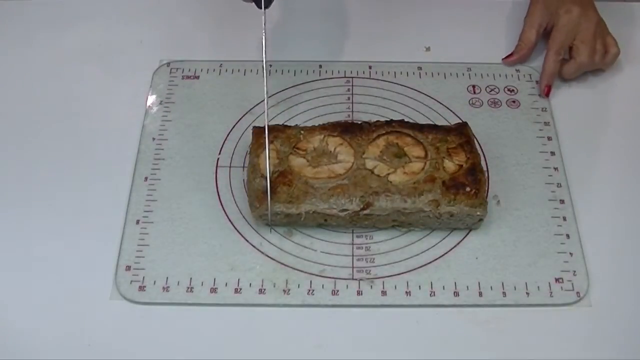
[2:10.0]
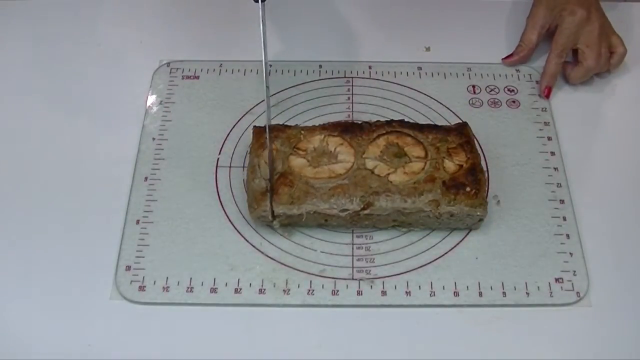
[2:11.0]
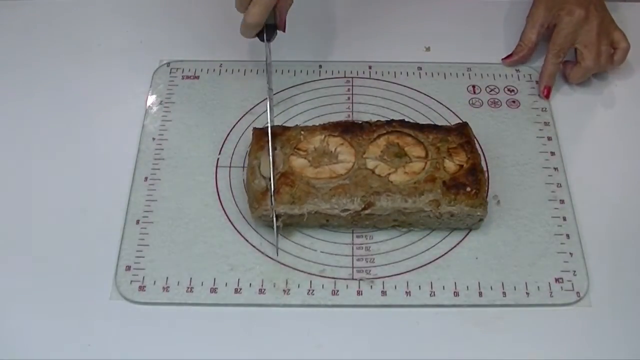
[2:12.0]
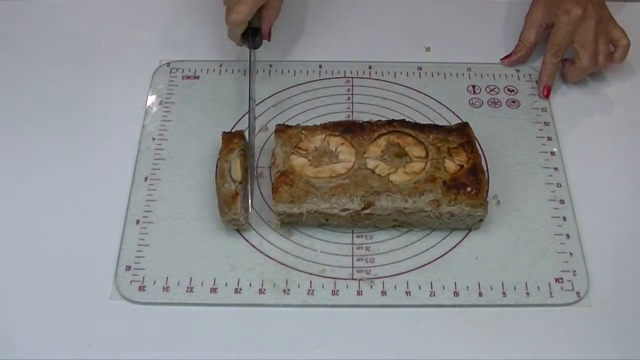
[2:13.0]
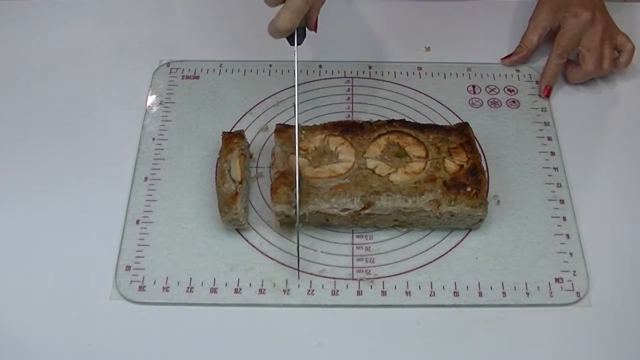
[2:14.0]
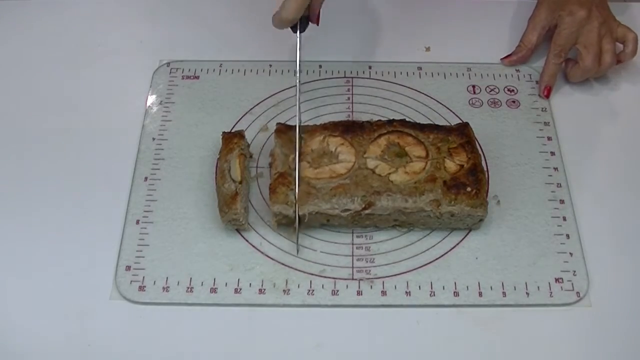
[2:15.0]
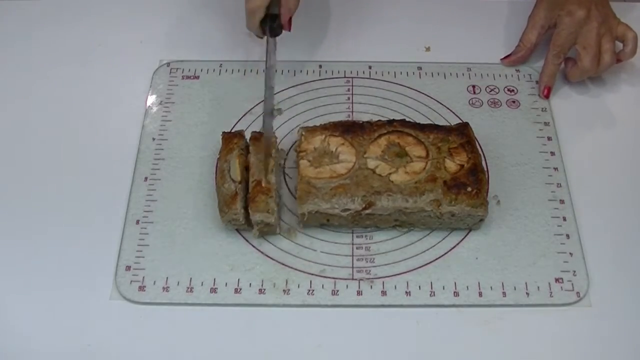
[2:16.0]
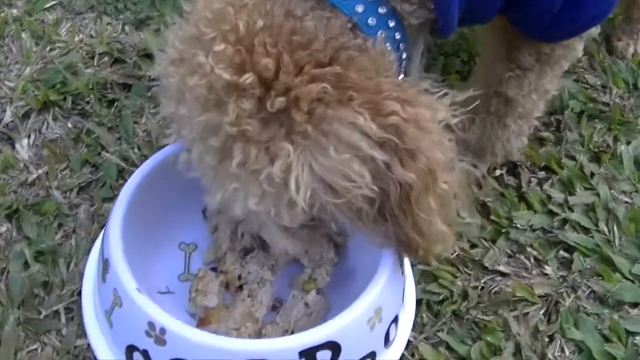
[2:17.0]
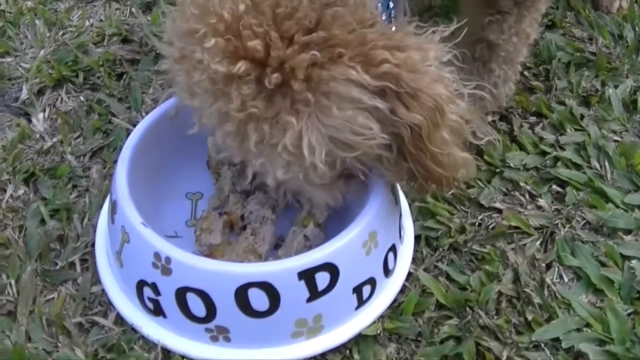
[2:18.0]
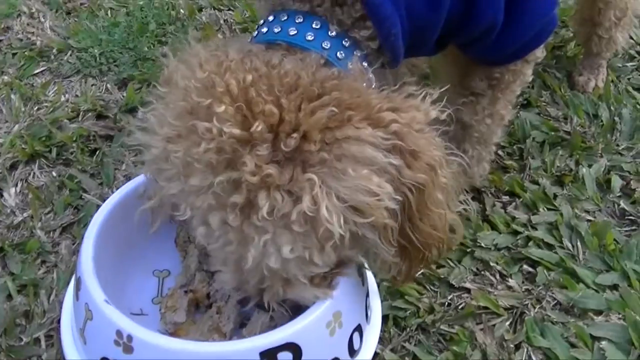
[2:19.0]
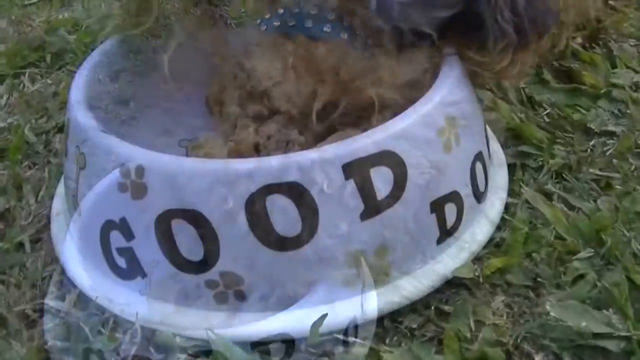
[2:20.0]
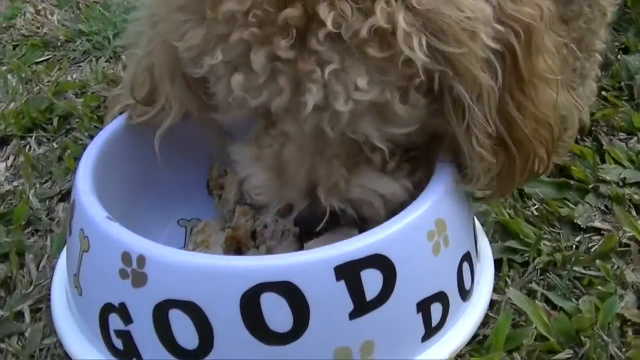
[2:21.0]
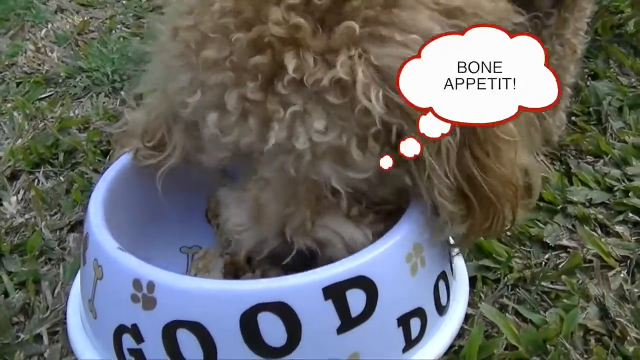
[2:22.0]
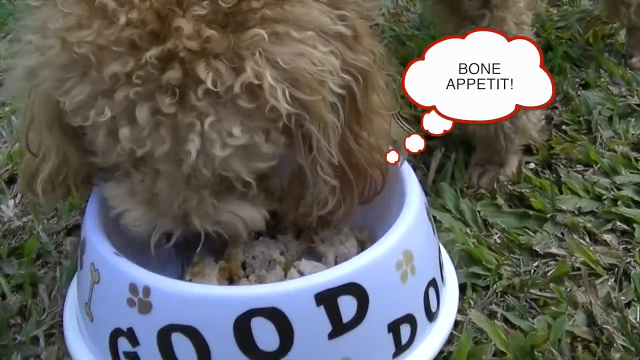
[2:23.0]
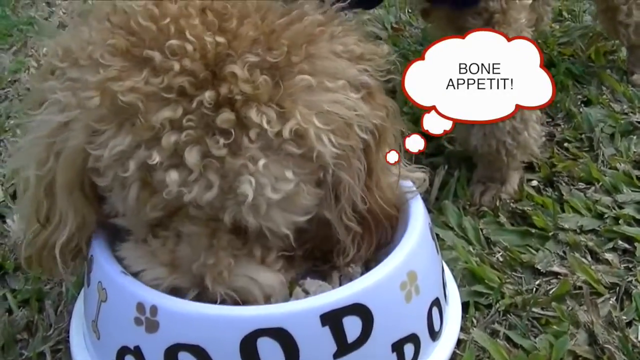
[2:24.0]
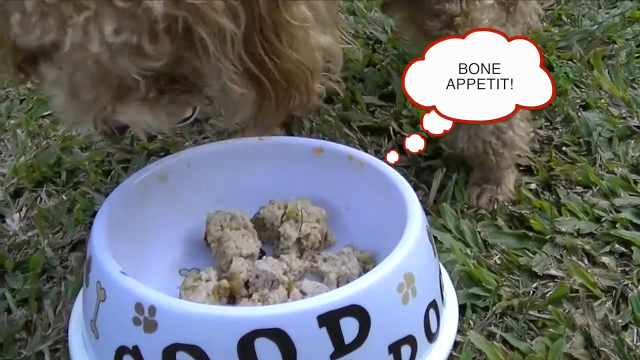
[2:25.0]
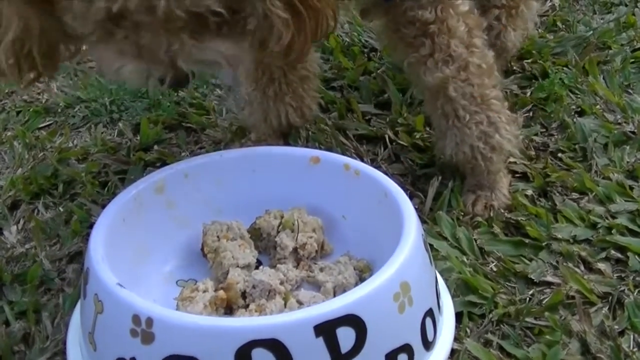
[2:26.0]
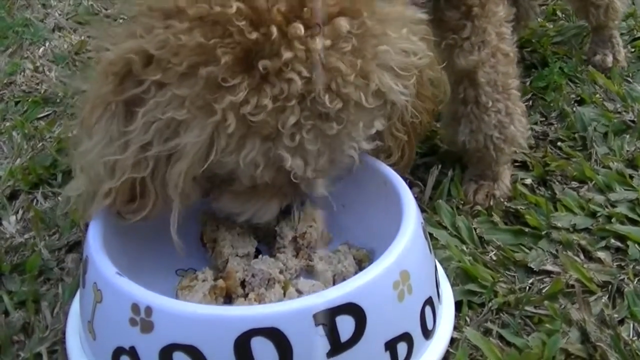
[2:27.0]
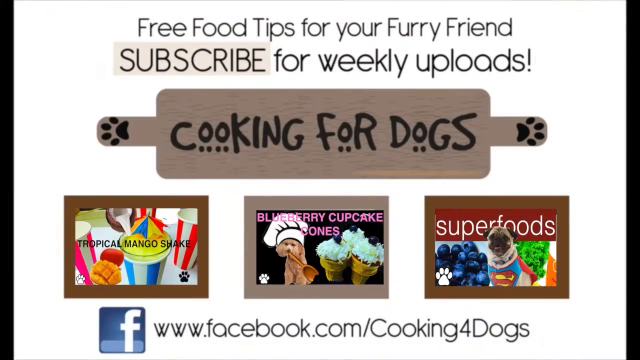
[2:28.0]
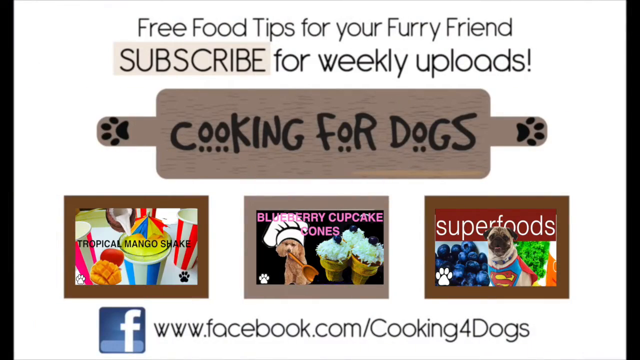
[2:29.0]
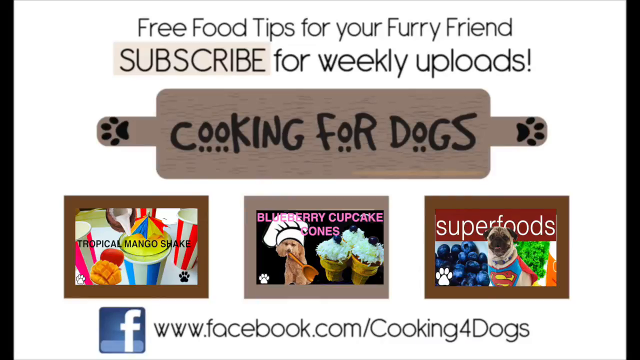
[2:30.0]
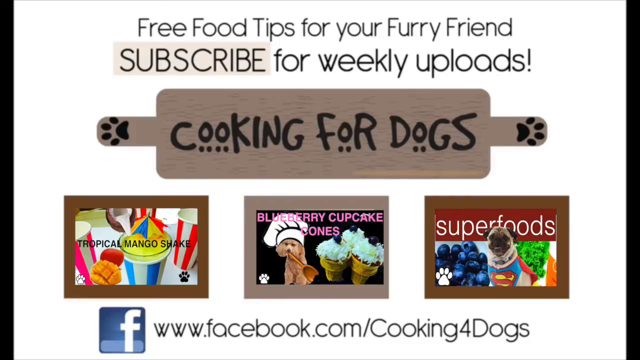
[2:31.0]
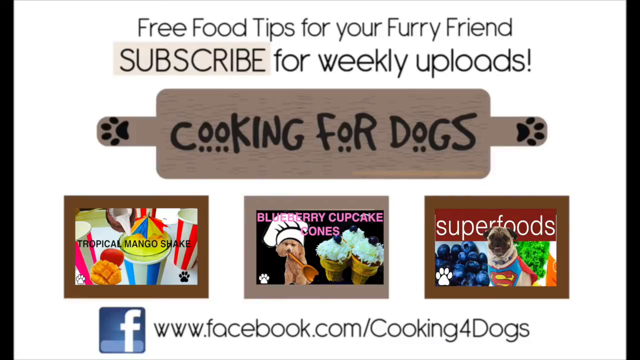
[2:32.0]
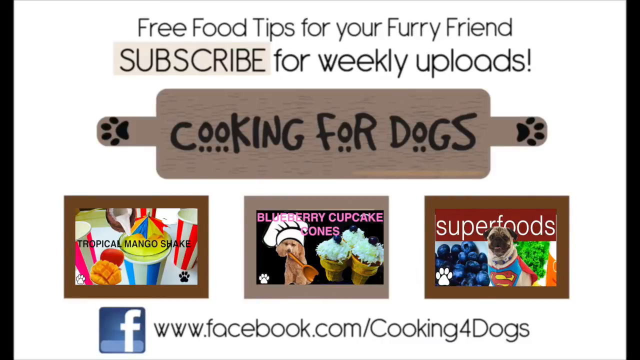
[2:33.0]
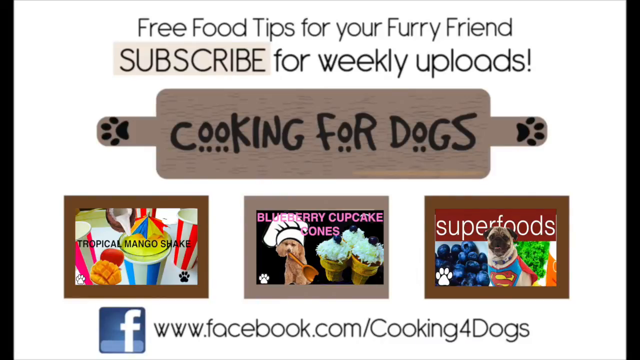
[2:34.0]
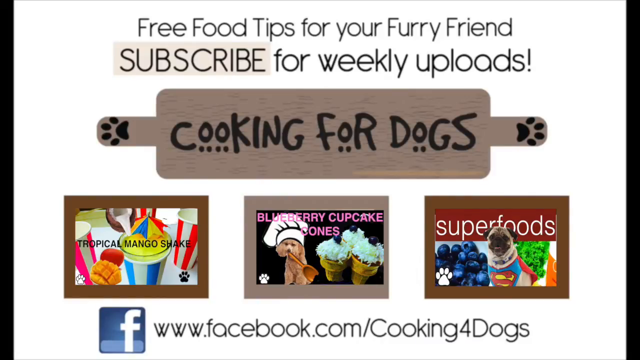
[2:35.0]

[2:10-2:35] A lady uses a knife to cut what appears to be cooked meatloaf in a rectangular shape with what look to be pineapple rings on top. It is on a plastic mat on a white table, and she cuts it into thin slices one by one. The scene moves outdoors to green grass, where a brown dog stands eating out of a bowl that says "good dog"; he appears to be eating the meatloaf that was cut up earlier, so it appears to be meatloaf made for dogs. The dog has a blue collar with little diamonds on it and appears to be wearing some sort of blue outfit. As the dog seems to be eating, a graphic appears that seems to be speech bubbles coming from the dog, saying "Bone Appetit!". Next is an infographic with a white background that says "free food tips for your furry friend", "subscribe for weekly uploads" and "cooking for dogs". At the bottom are three graphics: "tropical mango shake", "blueberry cupcake cones" with a dog in the background, and "super foods" with a little pug in a Superman outfit. At the bottom are the Facebook icon and "www.facebook.com/cooking4dogs".